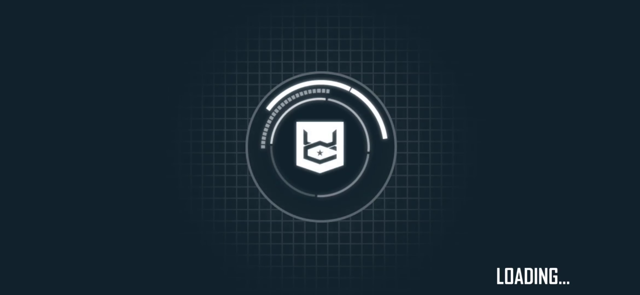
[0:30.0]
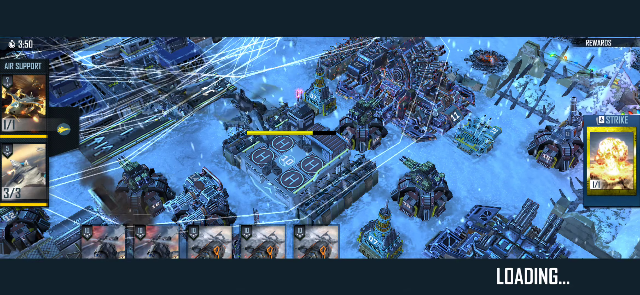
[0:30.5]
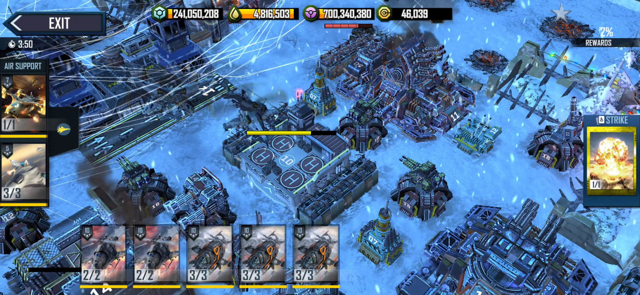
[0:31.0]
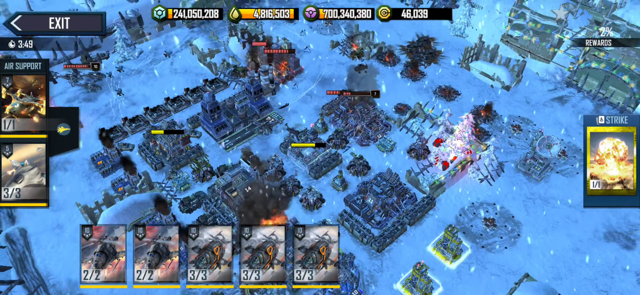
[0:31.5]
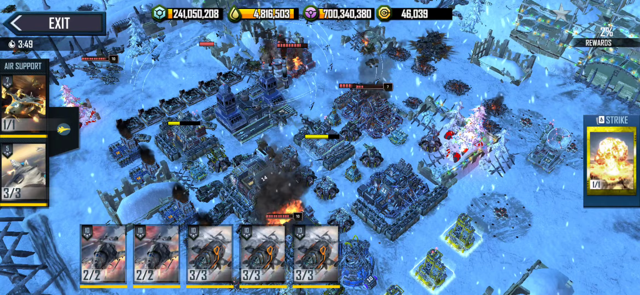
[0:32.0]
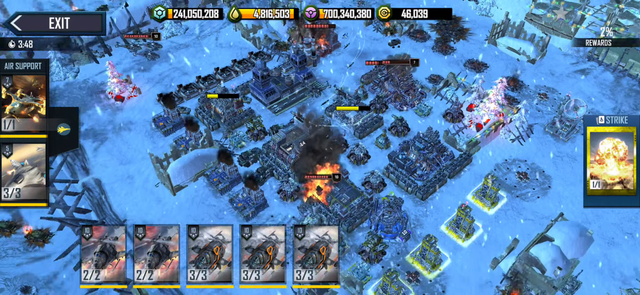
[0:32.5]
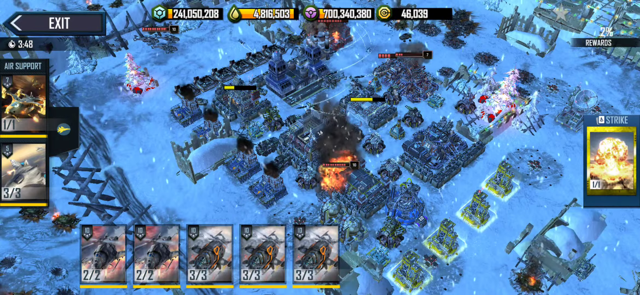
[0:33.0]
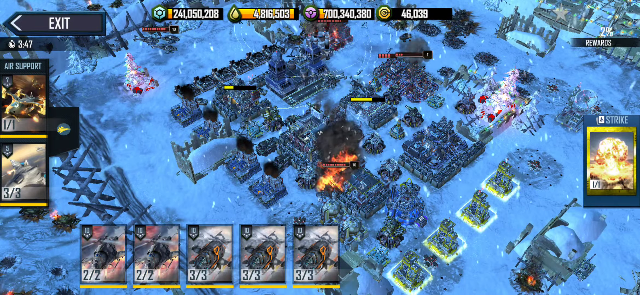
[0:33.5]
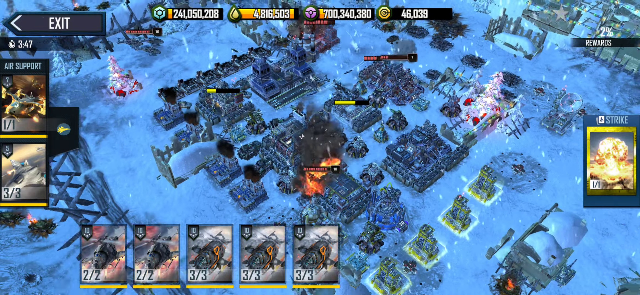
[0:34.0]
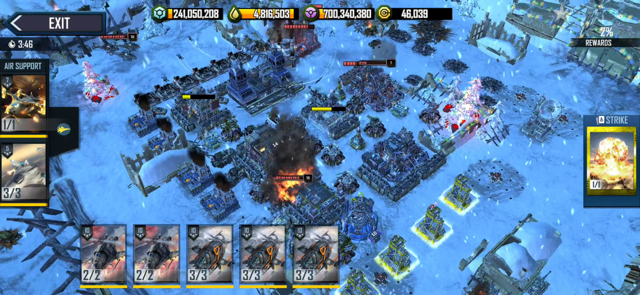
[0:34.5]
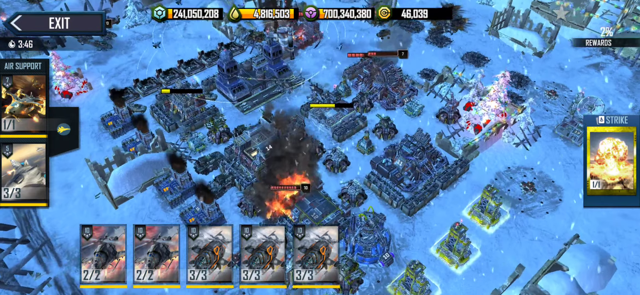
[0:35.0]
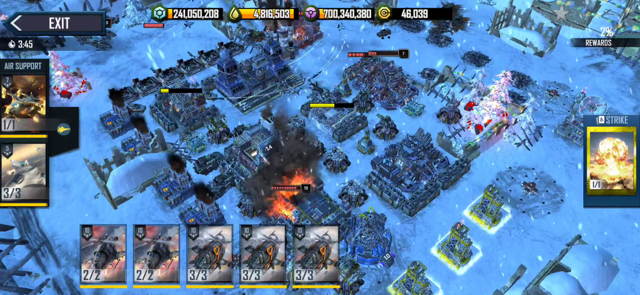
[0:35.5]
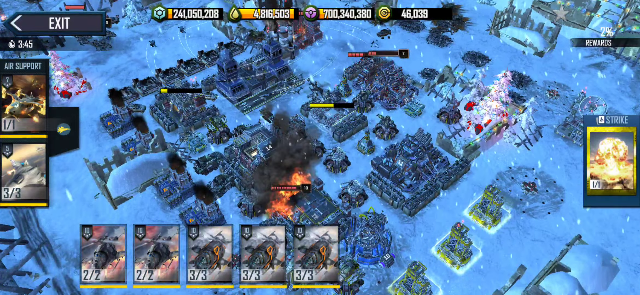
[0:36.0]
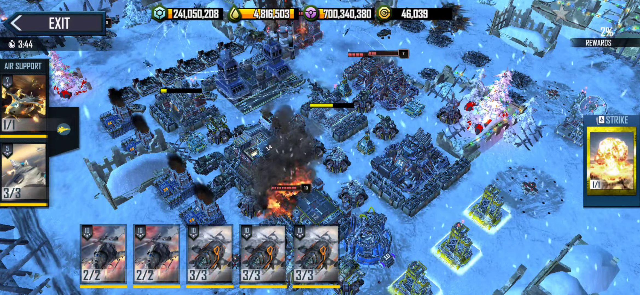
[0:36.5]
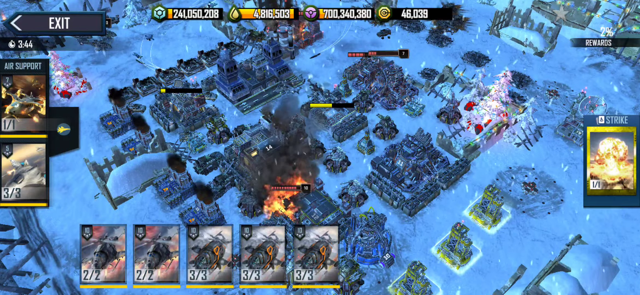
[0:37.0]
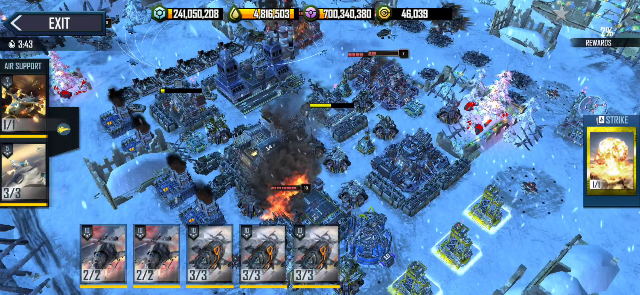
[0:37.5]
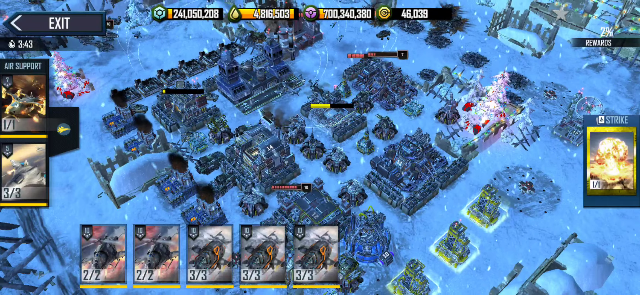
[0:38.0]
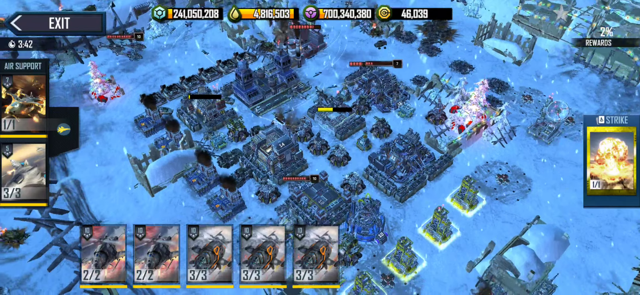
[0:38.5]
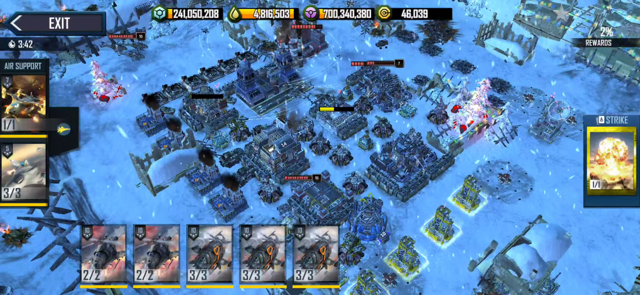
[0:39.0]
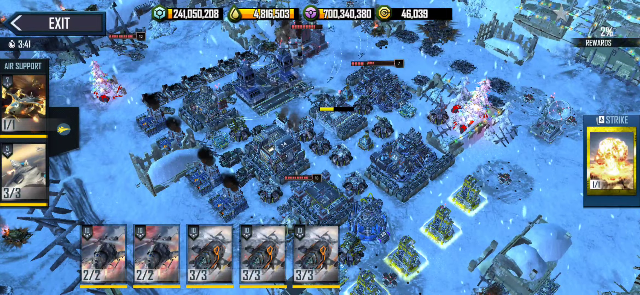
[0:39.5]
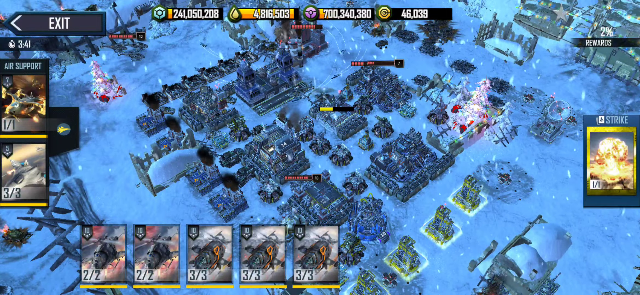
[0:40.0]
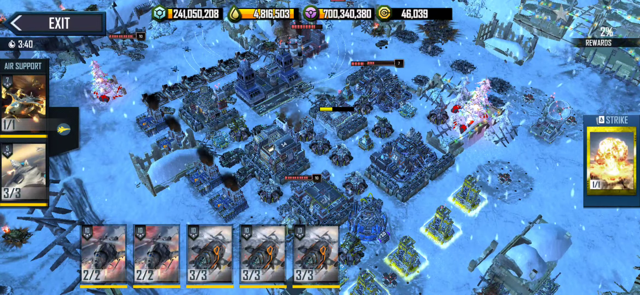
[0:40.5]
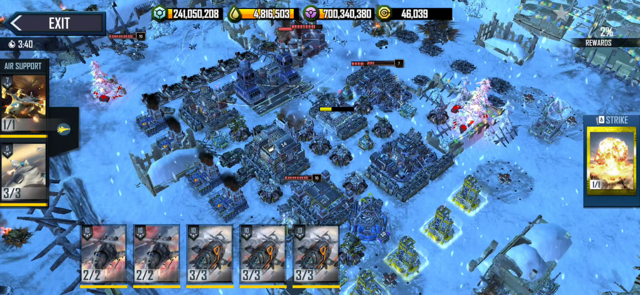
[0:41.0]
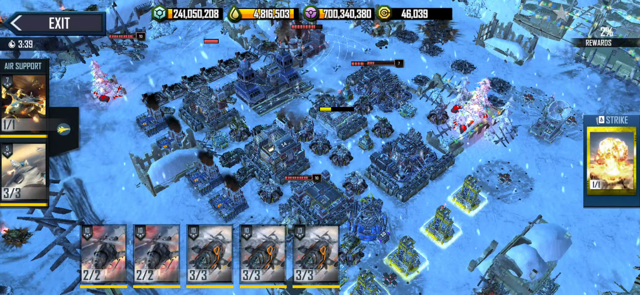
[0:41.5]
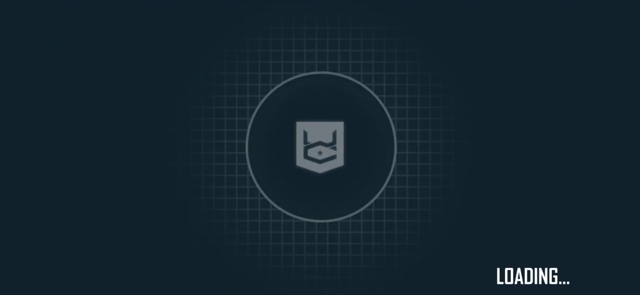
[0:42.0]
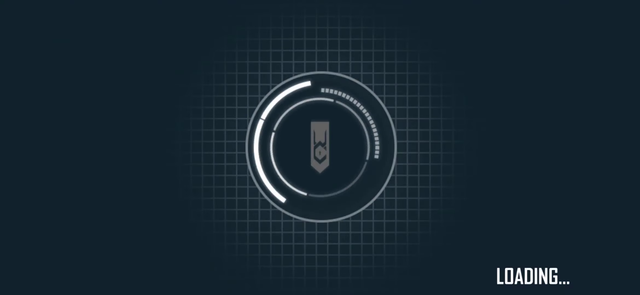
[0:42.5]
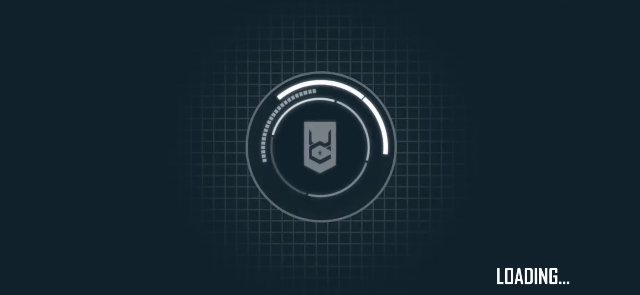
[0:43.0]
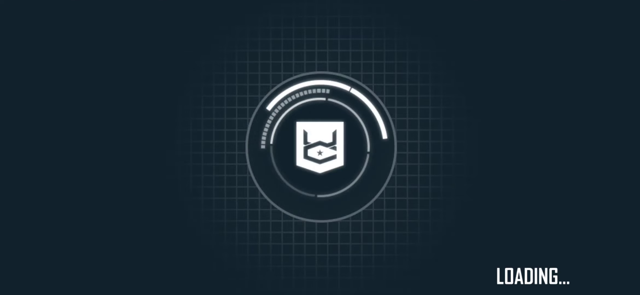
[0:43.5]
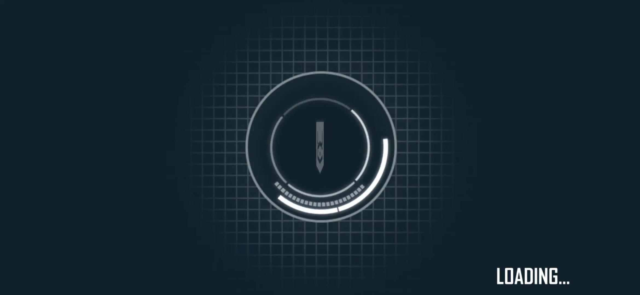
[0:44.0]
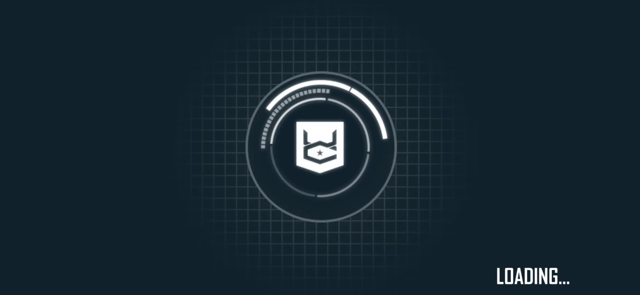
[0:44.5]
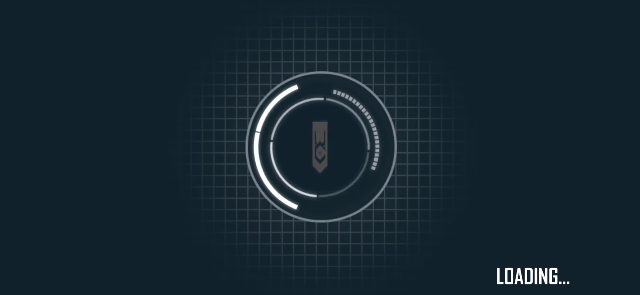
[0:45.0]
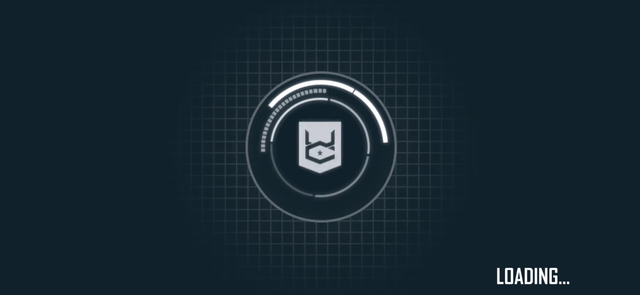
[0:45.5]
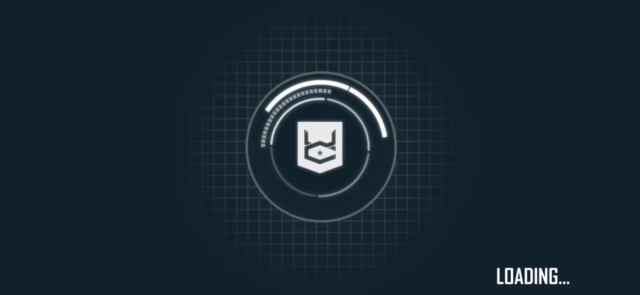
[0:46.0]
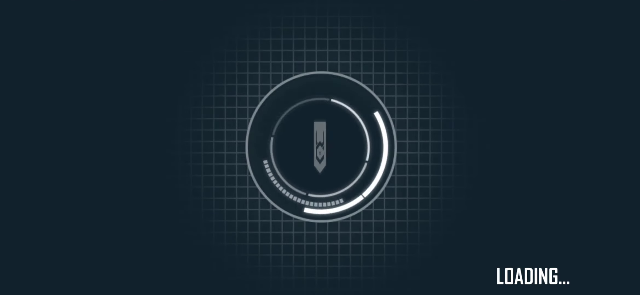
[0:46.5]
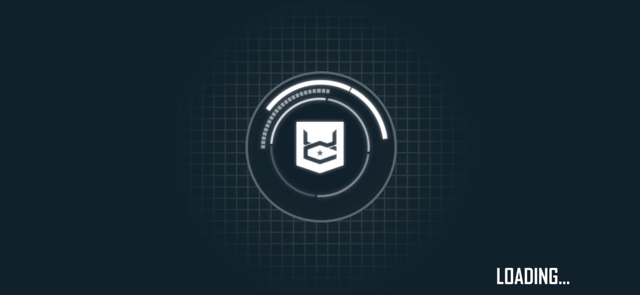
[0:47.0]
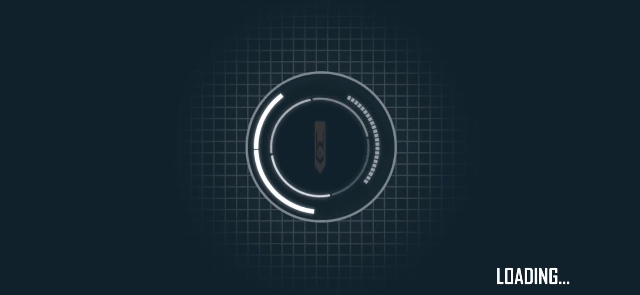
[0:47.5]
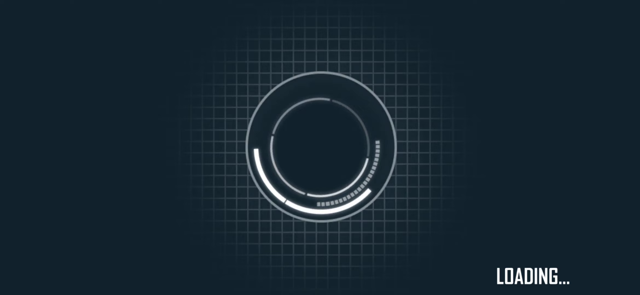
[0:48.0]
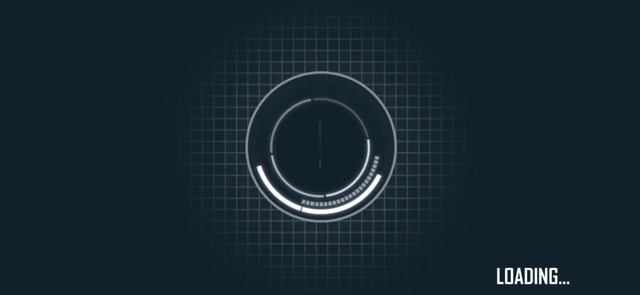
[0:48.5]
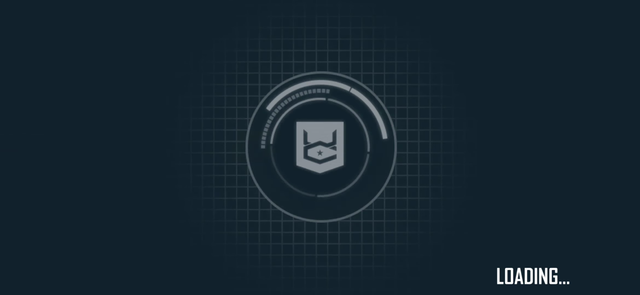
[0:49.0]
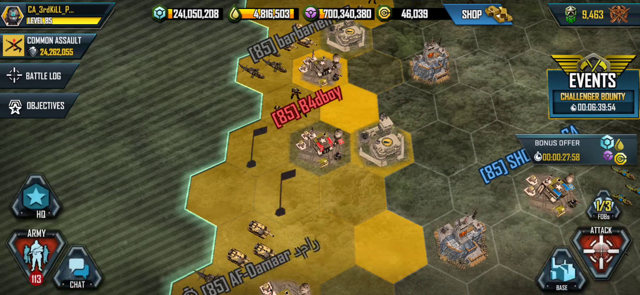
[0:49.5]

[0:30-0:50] After the loading screen, the scene loads into what looks like a military installation. Yellow health bars and a different kind of red health bar appear on different parts of the installation, and it looks like an area where two opposing factions are fighting. On screen, boxes say "air support", showing different kinds of airplanes or helicopters; on the right there is what looks like a nuclear explosion and the word "strike". The scores appear here as well. The bars of the yellow installation slowly decrease, and then the player apparently X's out of it, returning to a loading screen. The view is back on the big battle map, where 85b4dboy seems to be the player being attacked, by an unknown attacker.